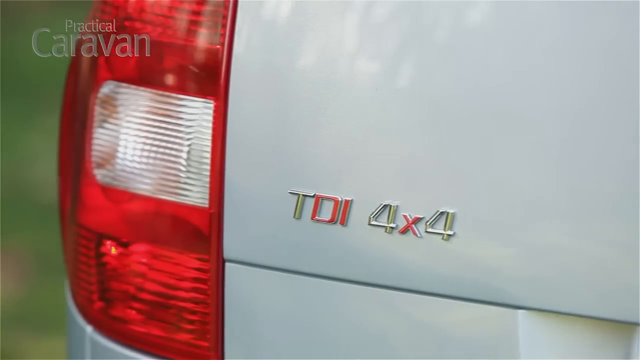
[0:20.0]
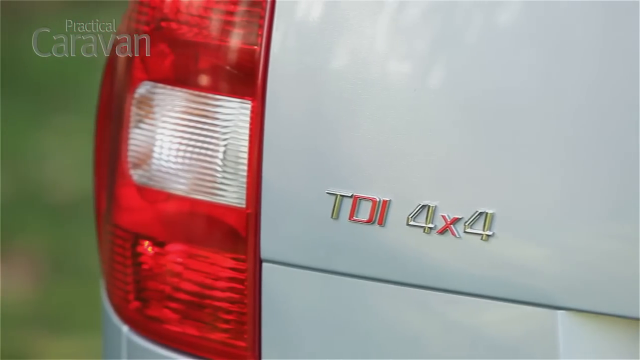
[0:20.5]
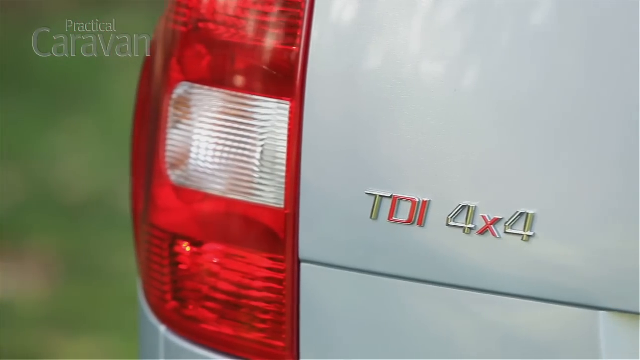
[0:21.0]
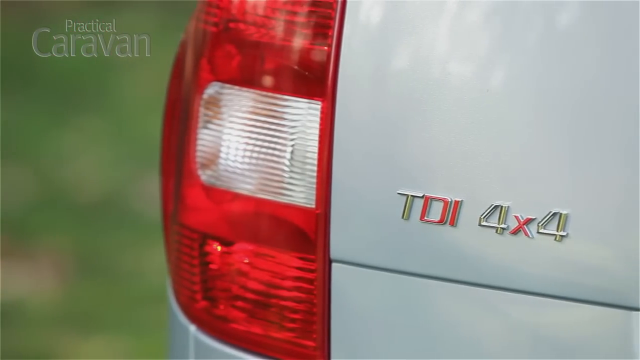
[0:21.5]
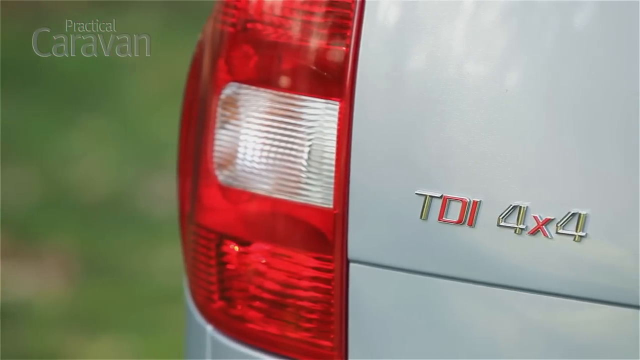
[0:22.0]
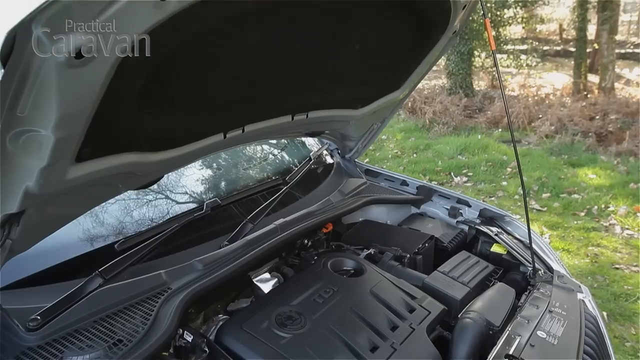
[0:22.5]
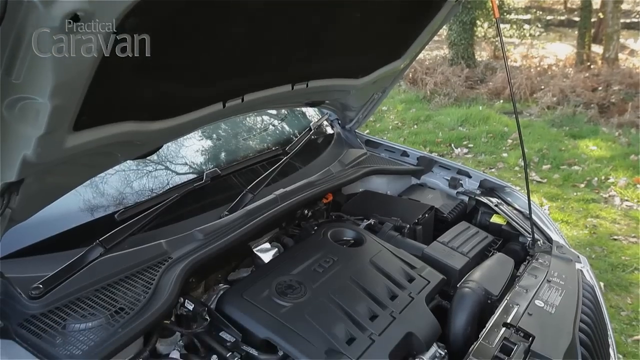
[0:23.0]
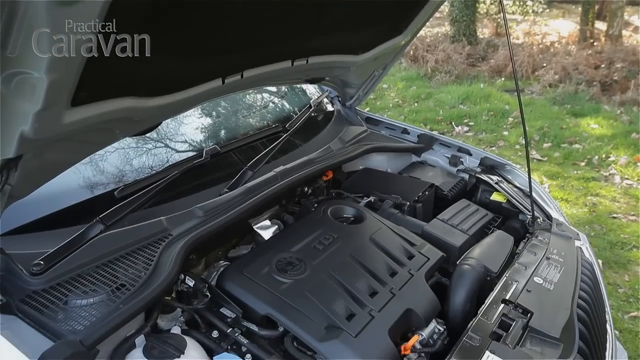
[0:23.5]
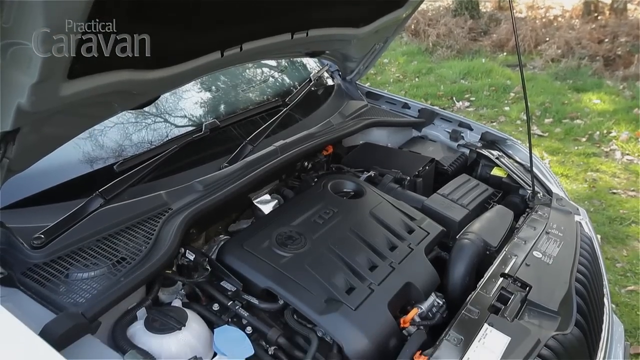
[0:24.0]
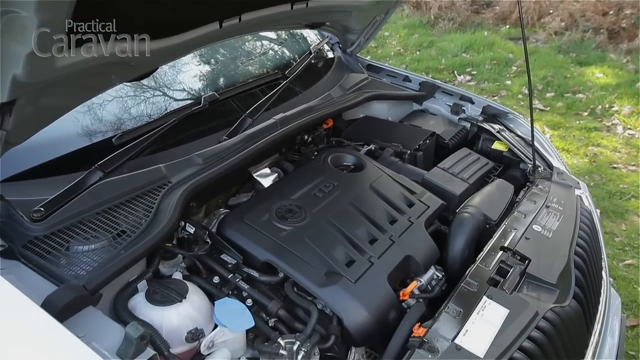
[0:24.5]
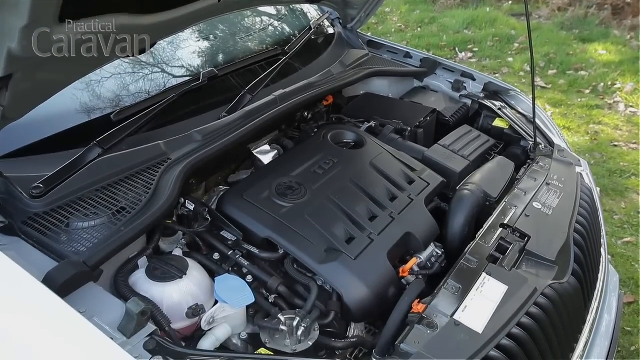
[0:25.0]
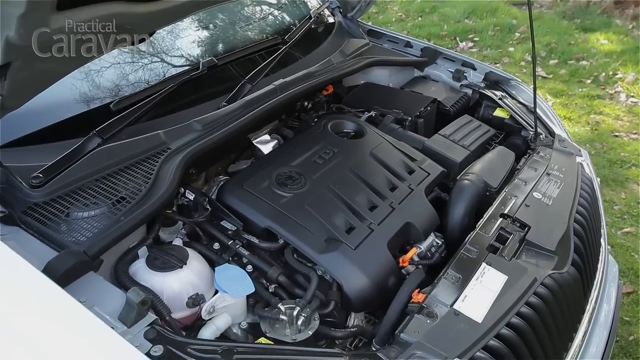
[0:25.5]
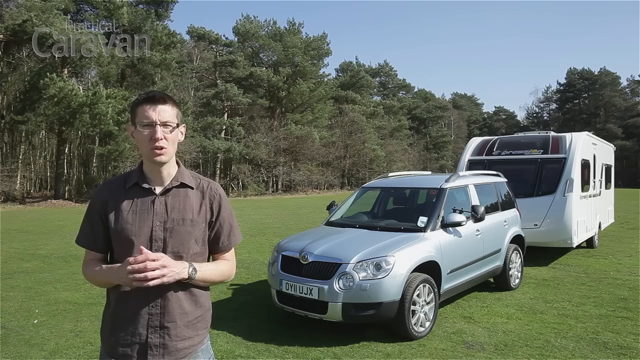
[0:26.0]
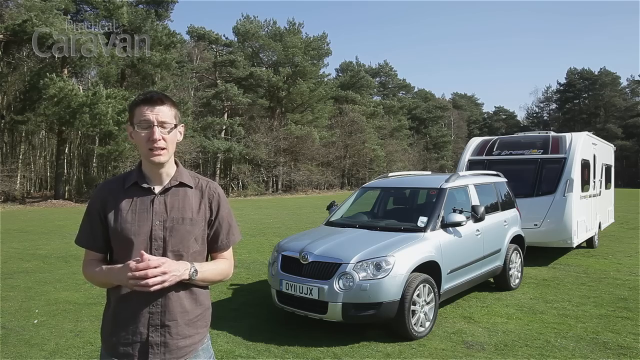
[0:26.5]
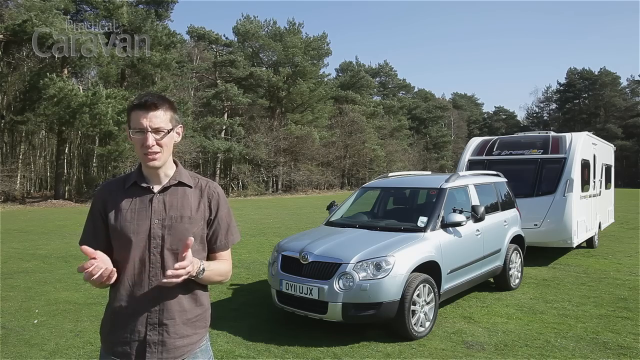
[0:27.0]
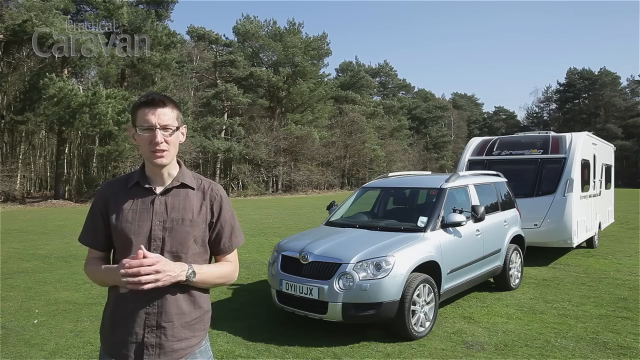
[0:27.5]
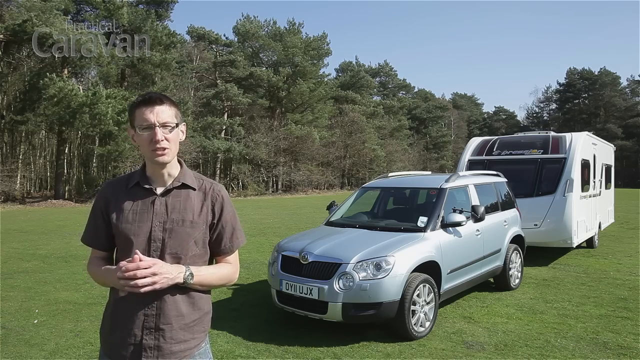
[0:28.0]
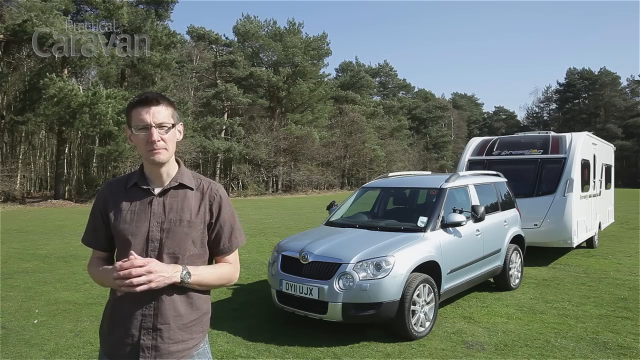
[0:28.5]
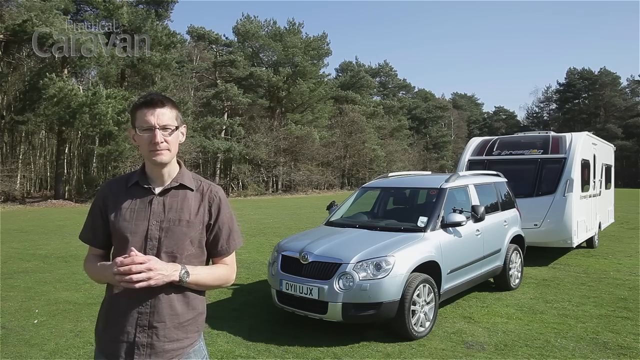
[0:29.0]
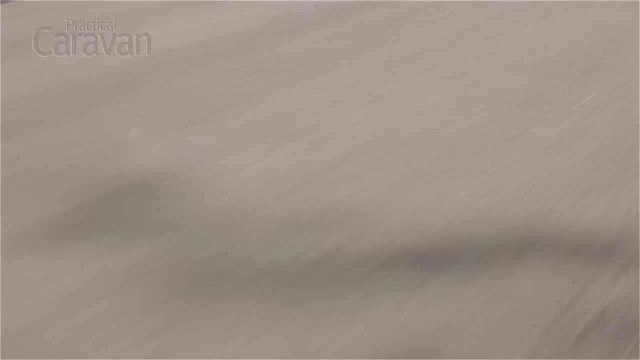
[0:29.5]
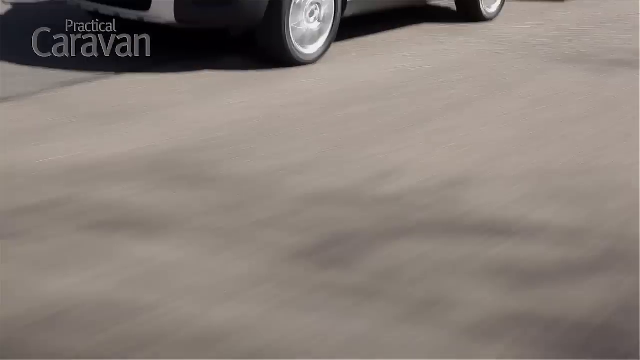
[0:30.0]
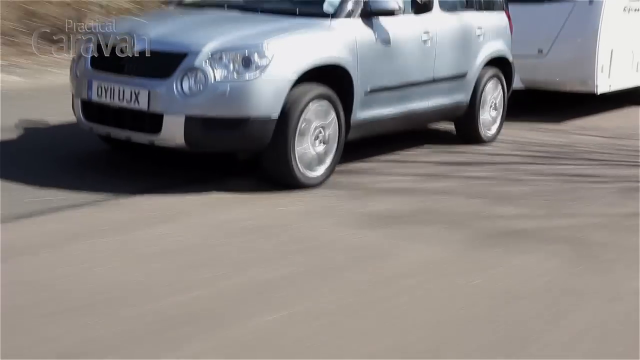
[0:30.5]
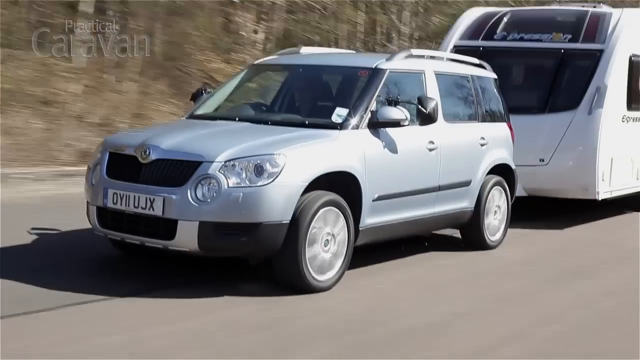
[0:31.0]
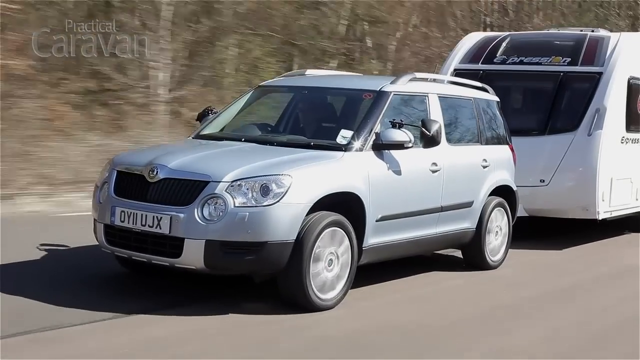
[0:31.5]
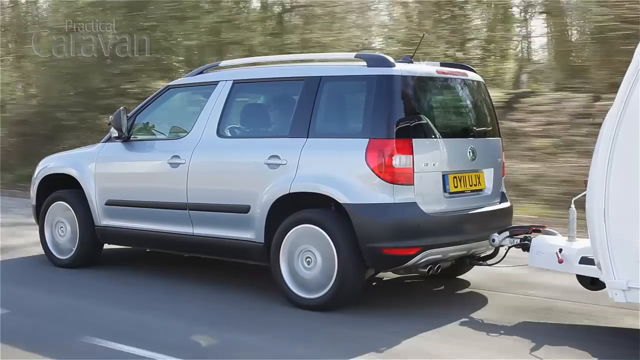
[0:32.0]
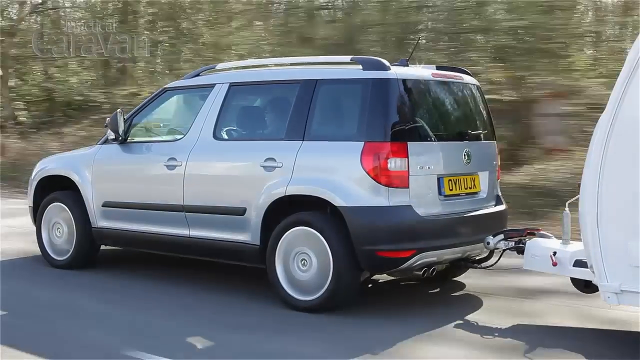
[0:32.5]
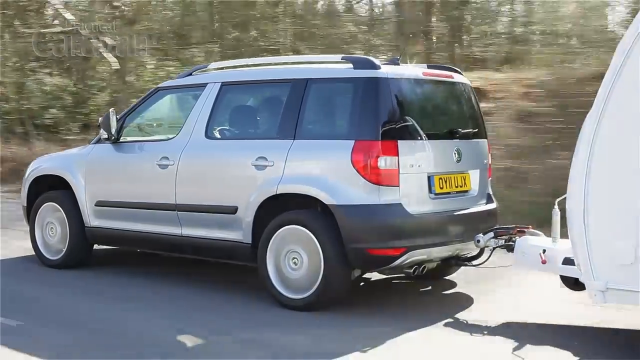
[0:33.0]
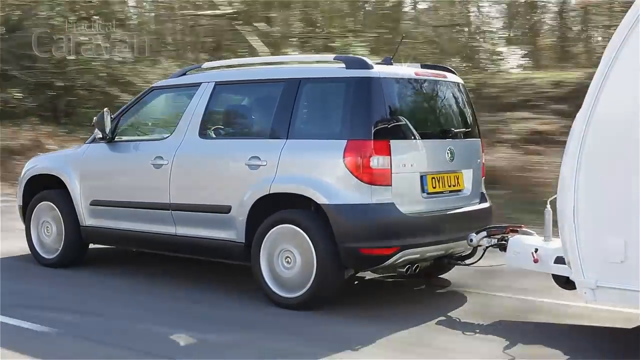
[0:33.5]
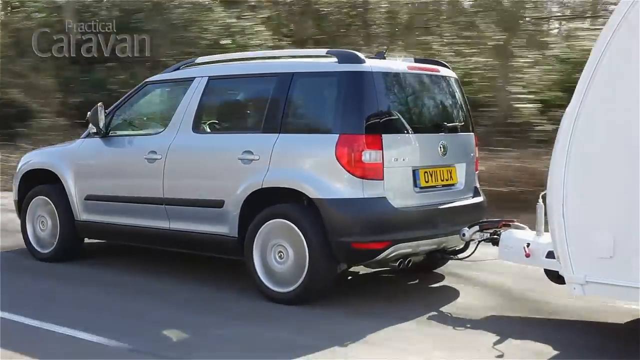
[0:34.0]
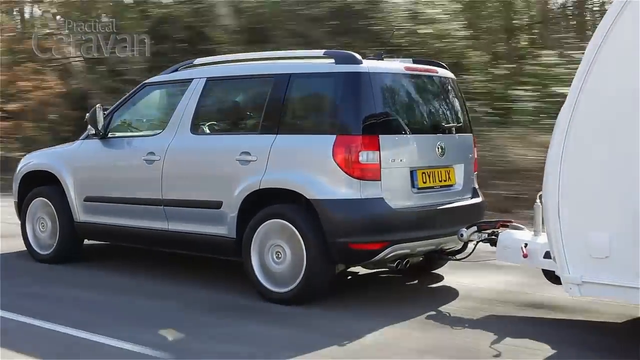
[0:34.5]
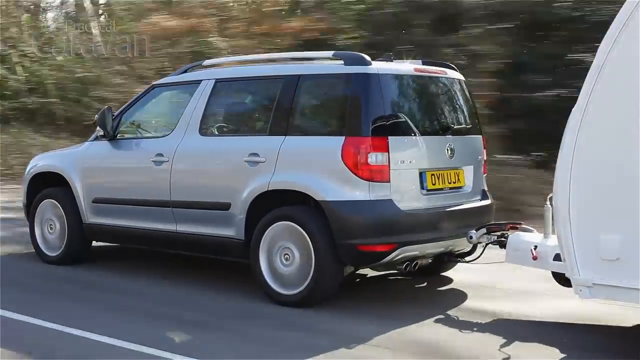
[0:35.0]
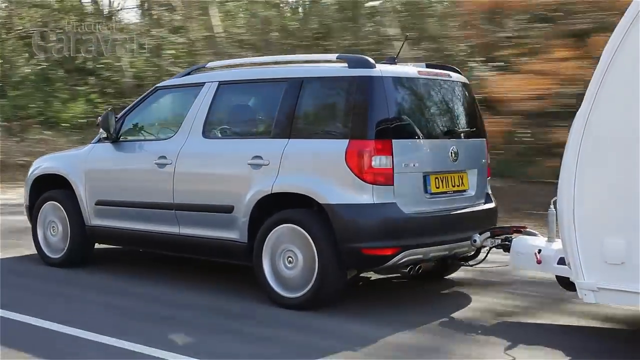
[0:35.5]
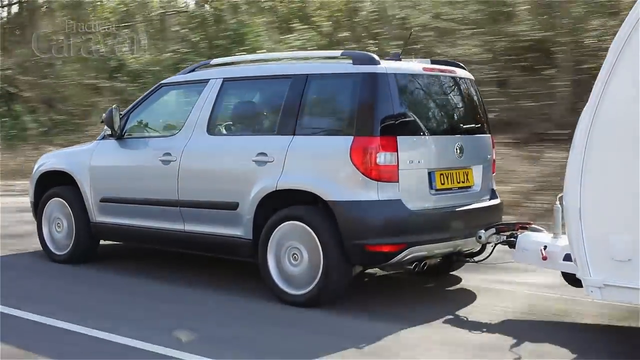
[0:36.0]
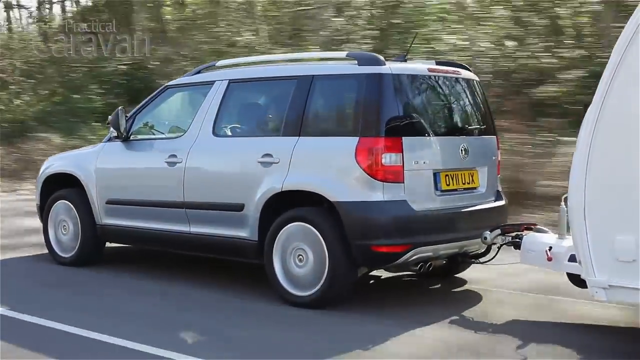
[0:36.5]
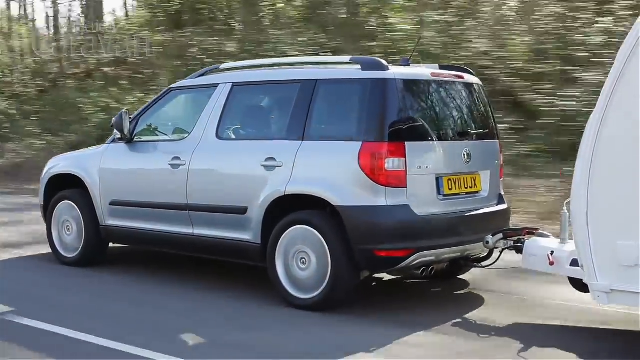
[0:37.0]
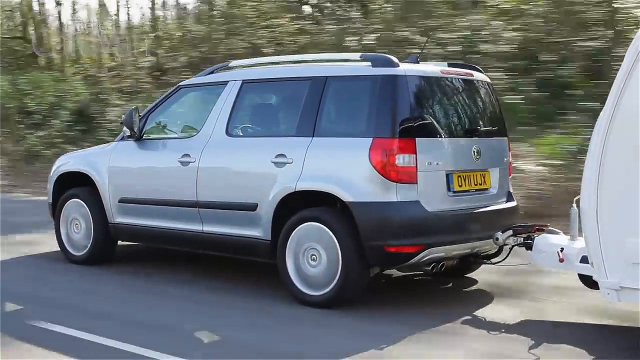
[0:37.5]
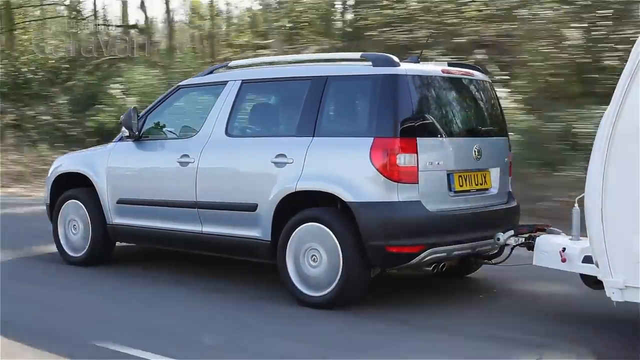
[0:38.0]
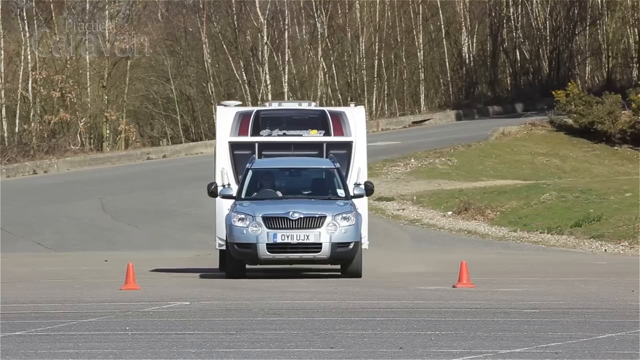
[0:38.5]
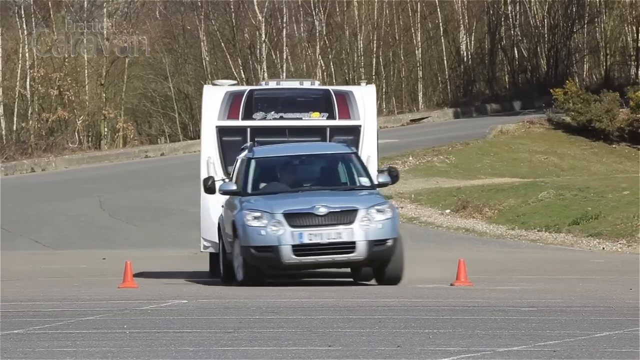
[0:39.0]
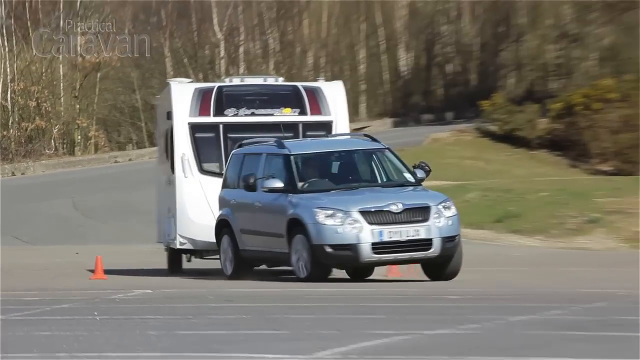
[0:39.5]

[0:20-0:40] The camera zooms in on the red left rear light of the car, with the words "TDI 4x4" to the right of it, and continues to move leftward. The video cuts to a shot with the hood up, showing the engine in the front of the vehicle. It then cuts back to the man speaking to the camera, seen from the waist up in his brown shirt, his hands clasped together at about chest level as he talks. Next, the car is on a road pulling the trailer, first shown from the front and then from the side, with the camera focused mainly on the vehicle. It is then seen straight ahead as it makes a turn around some cones.